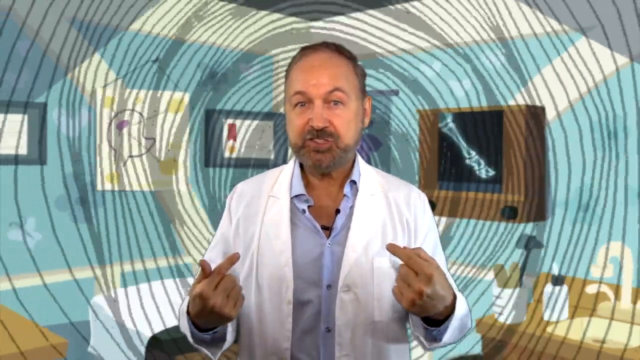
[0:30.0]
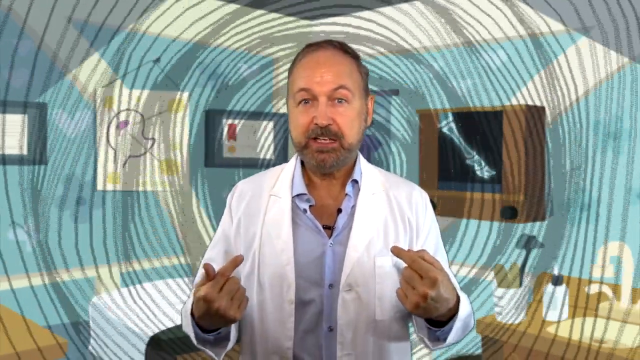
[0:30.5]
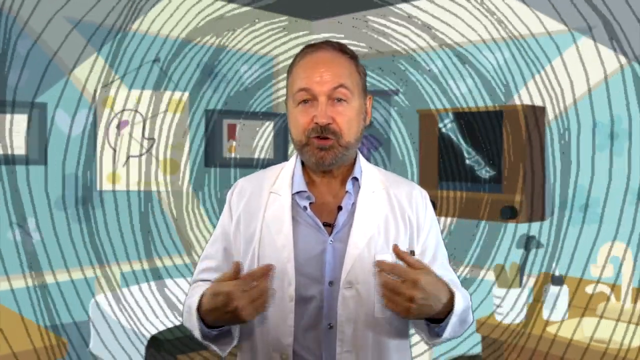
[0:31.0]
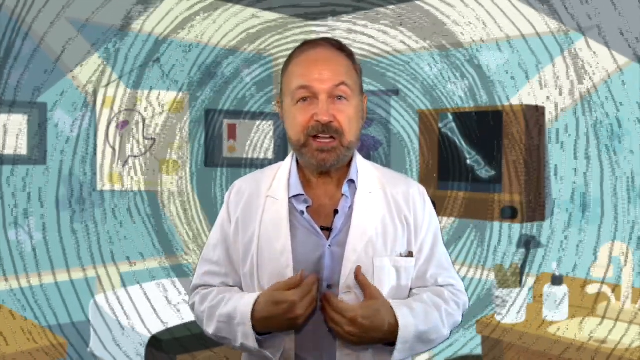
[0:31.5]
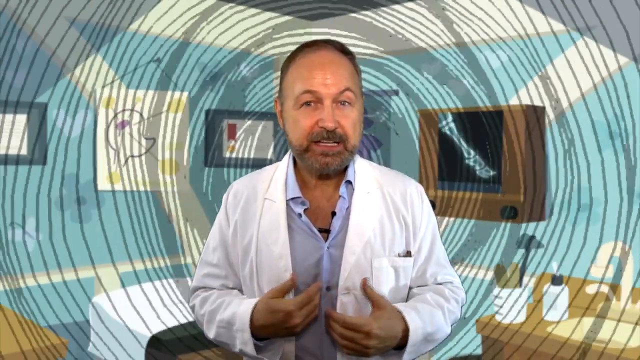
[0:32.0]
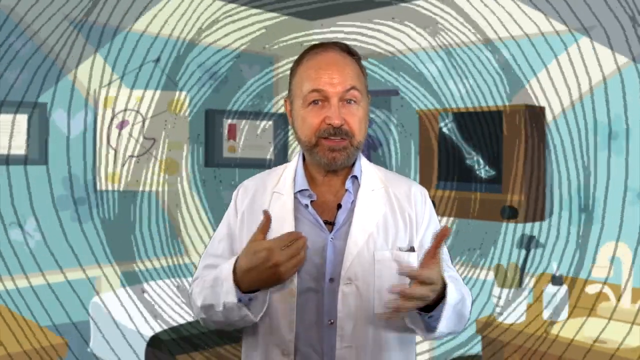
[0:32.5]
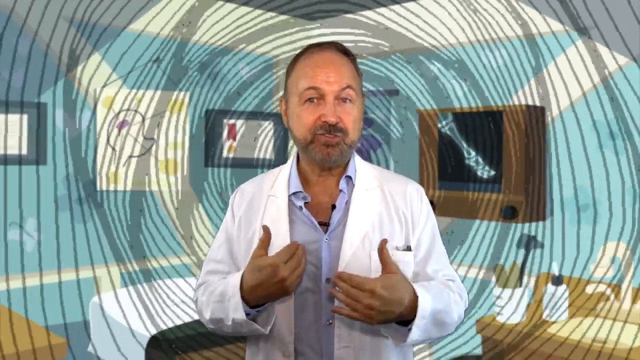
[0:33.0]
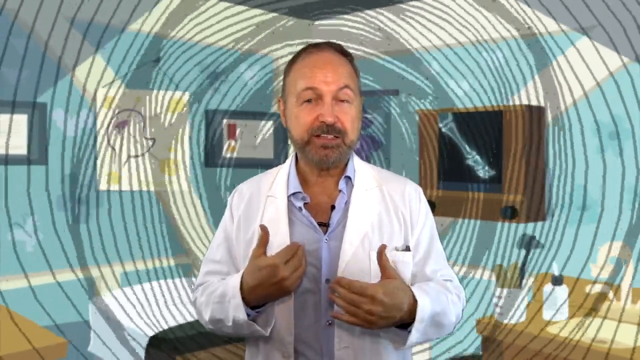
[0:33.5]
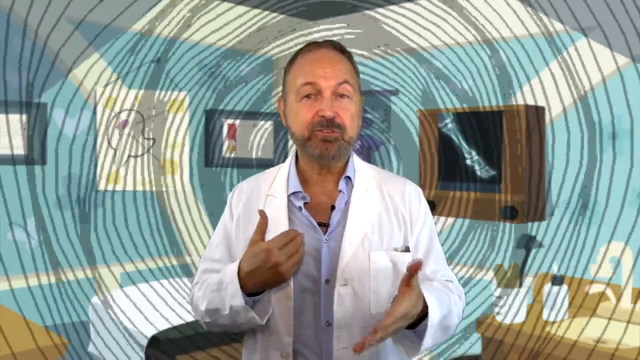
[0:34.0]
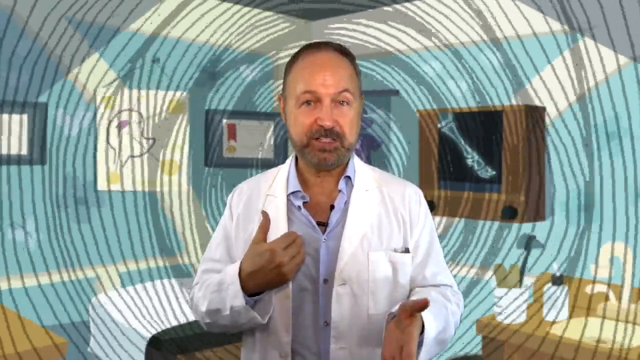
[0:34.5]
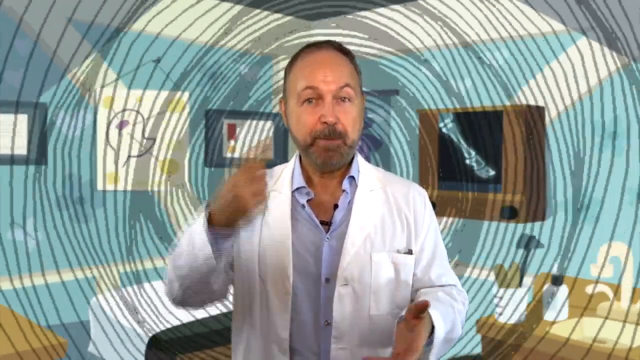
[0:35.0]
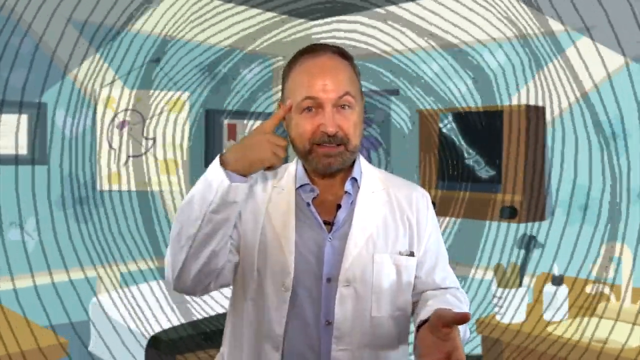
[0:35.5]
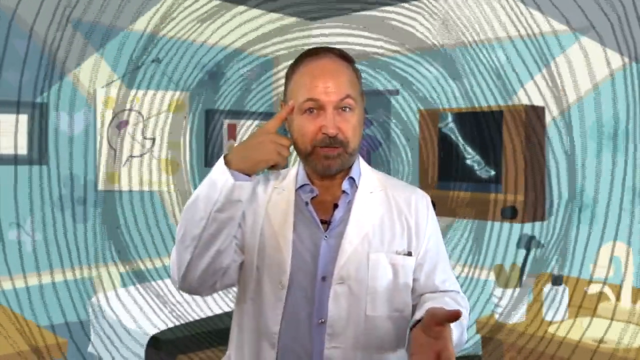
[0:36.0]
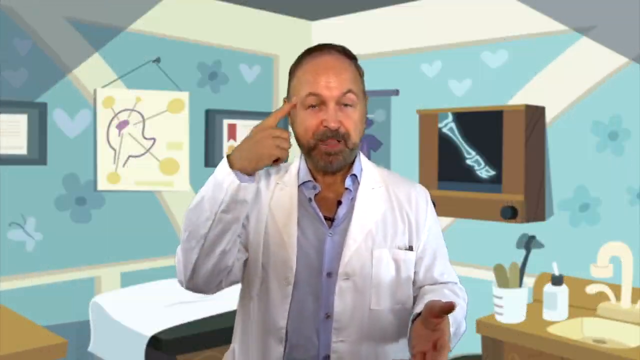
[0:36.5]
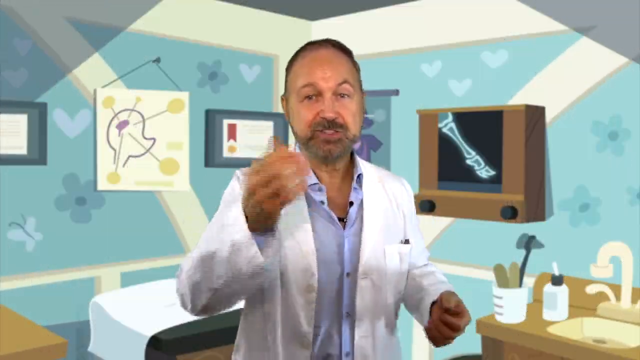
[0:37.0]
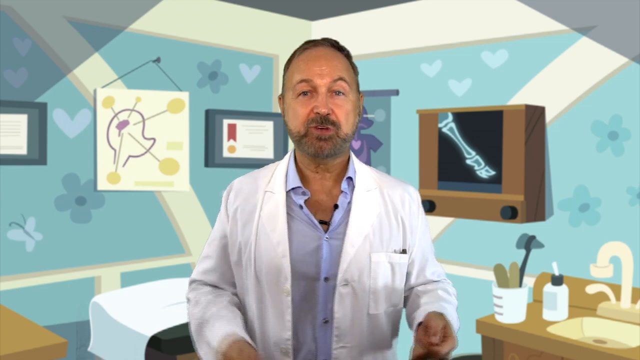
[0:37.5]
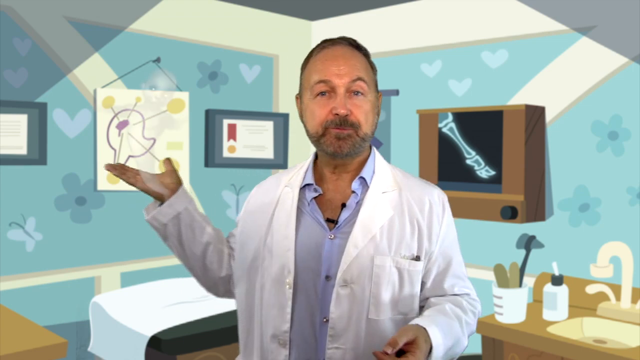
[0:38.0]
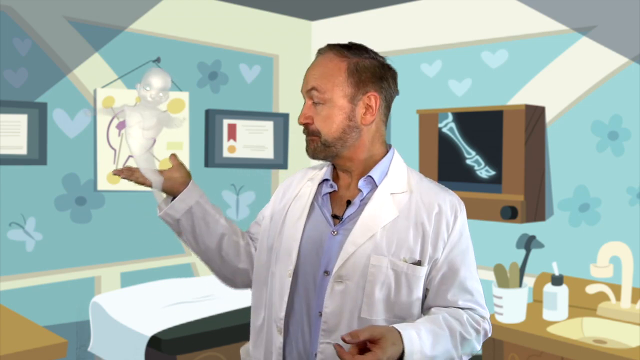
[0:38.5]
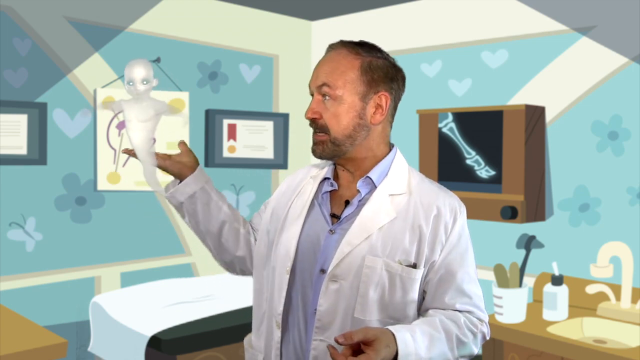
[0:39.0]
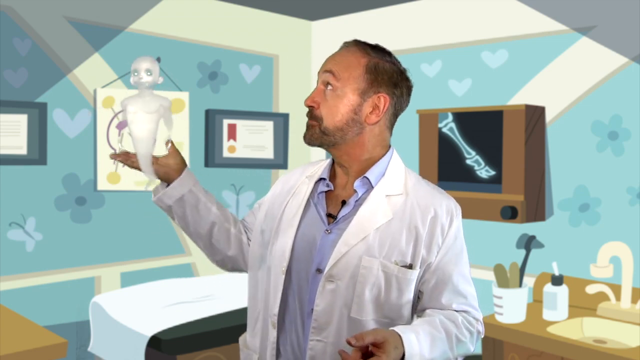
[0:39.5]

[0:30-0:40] The doctor, dressed in a white overall and looking sharp, has a microphone and is identified as Dr. Sai Rupian. There is a tap behind and a washing bottle. There is a picture on the wall, along with a desk behind and a bed behind for sick people to sleep on. The walls of the room are blue with white stripes, and there are pictures on the wall, including a picture of a human head showing its parts.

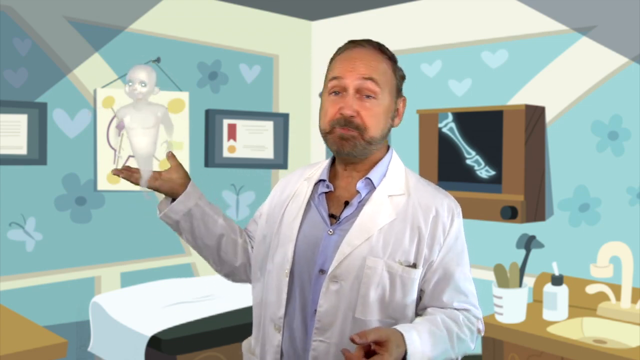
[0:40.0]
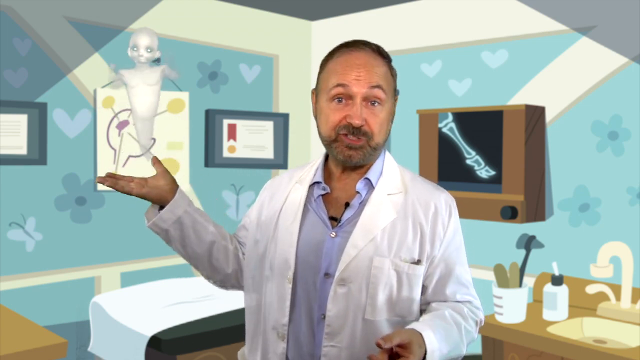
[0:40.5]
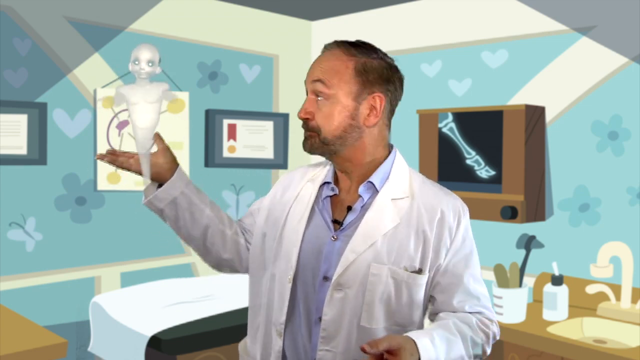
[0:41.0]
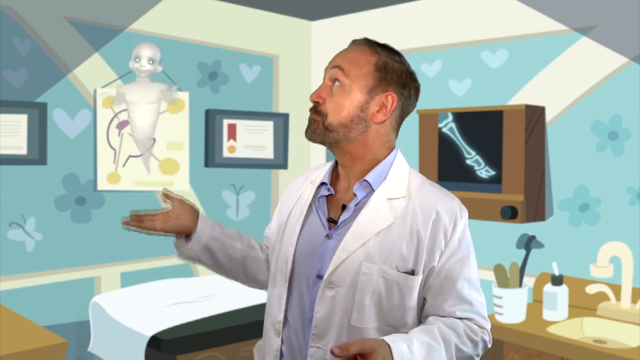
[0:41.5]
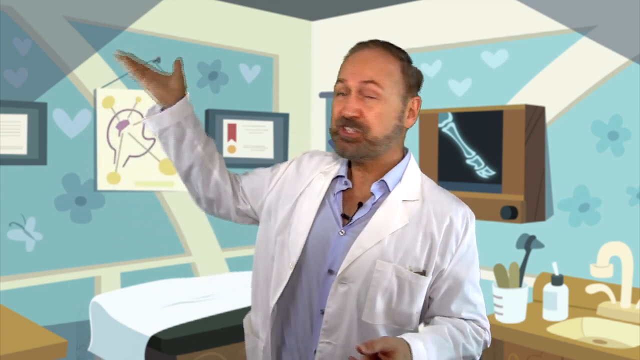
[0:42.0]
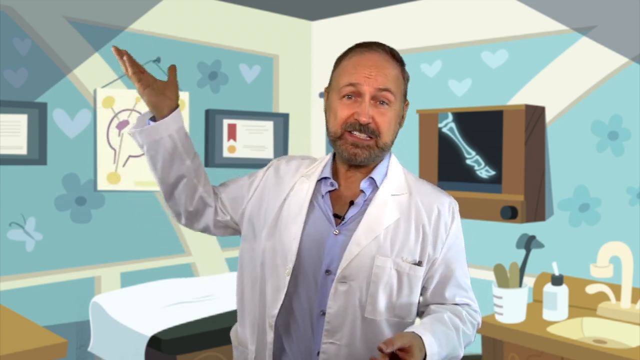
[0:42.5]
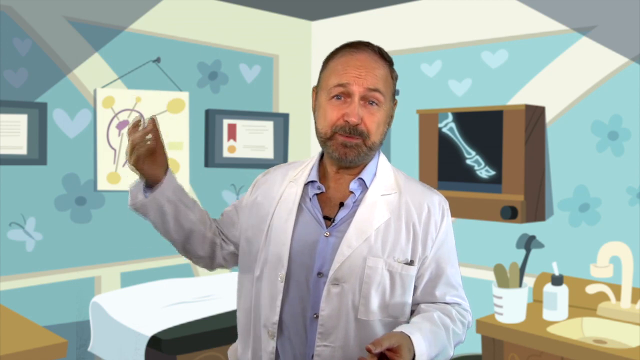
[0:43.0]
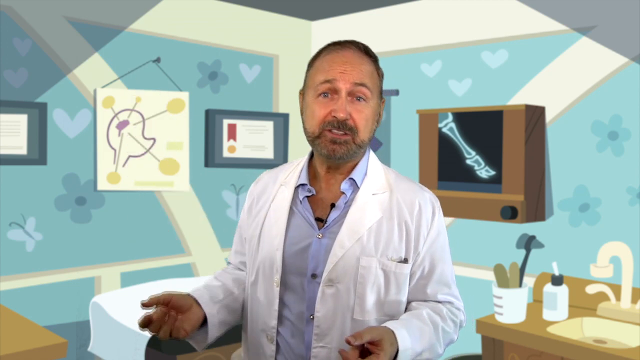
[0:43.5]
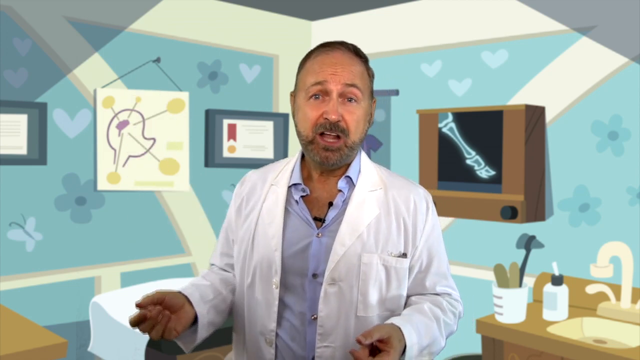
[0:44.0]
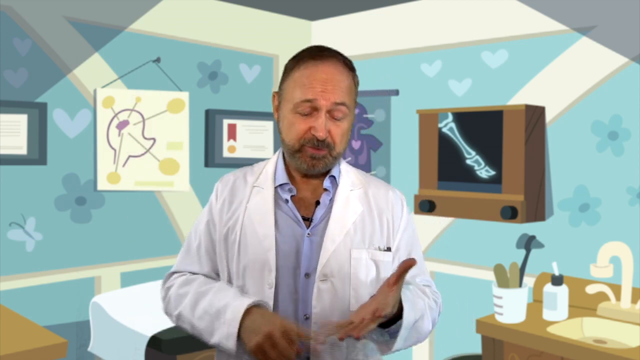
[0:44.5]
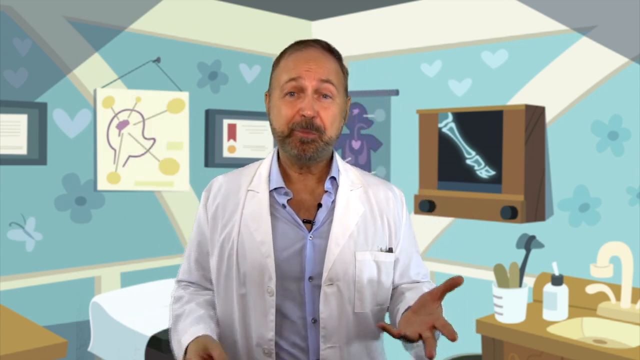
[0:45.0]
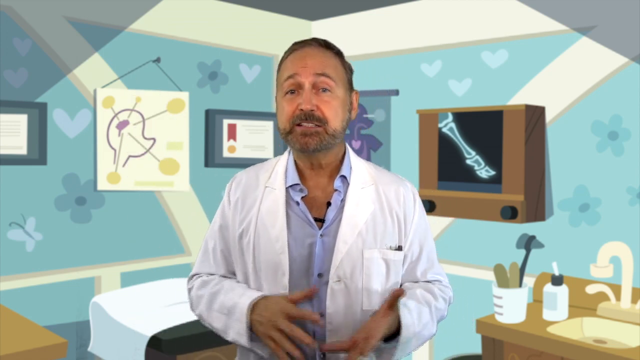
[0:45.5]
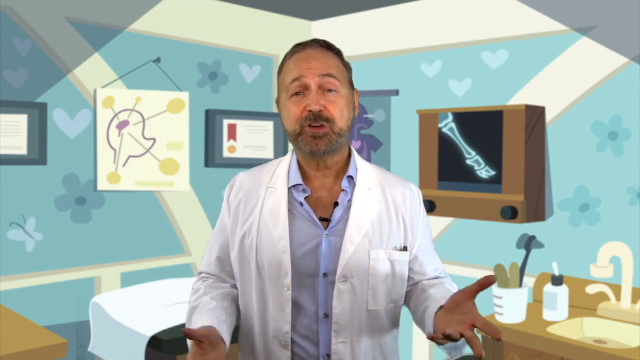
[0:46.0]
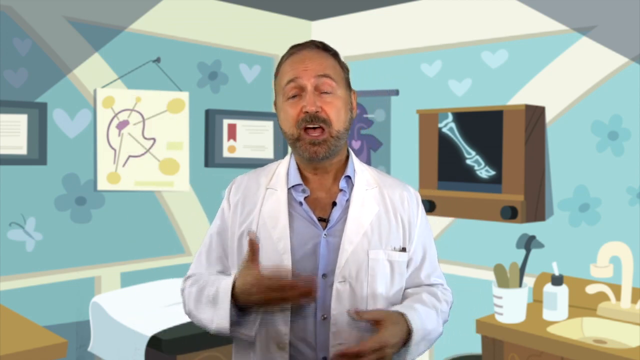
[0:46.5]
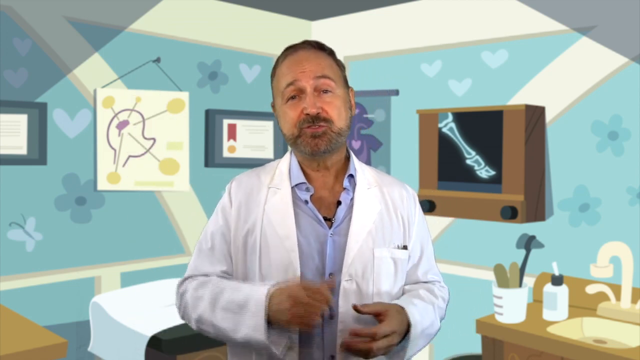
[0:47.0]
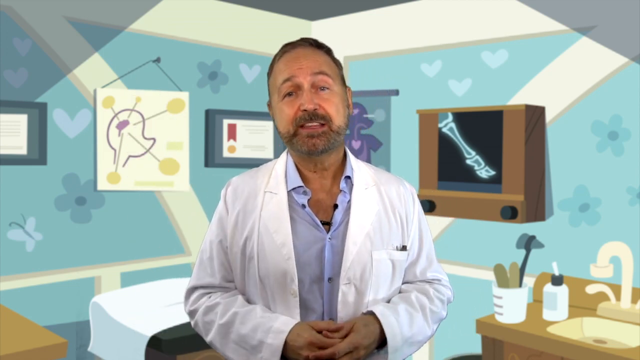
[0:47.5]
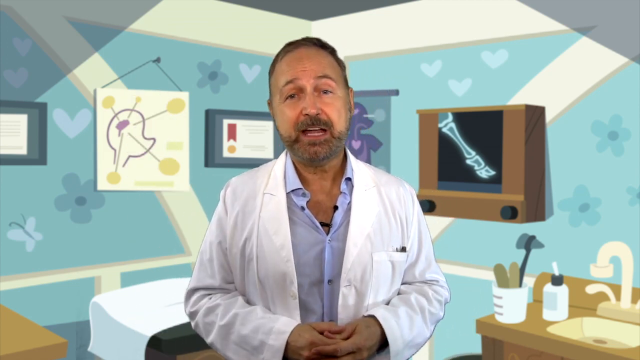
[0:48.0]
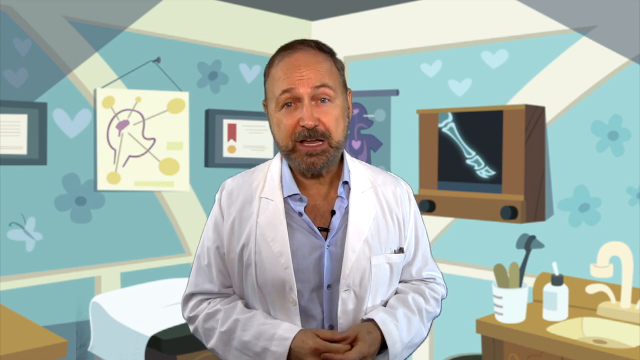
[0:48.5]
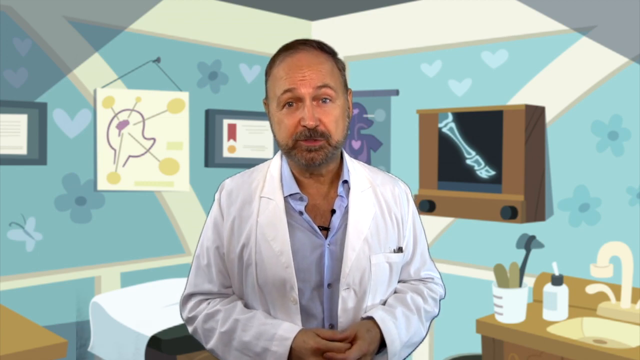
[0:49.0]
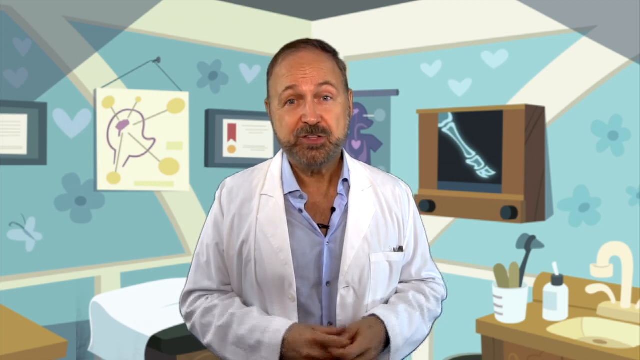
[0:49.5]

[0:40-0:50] A European doctor explains, gesturing with his hands and fingers, and holds a skeleton of a human body. He looks sharp and eloquent and shows character while explaining to viewers. The wall behind is blue with white stripes, and on the wall there is a picture of a tubular and a fibular. There is a bed behind for the sick. The room is big enough to accommodate patients.